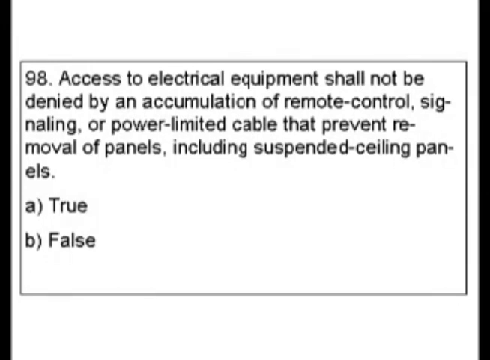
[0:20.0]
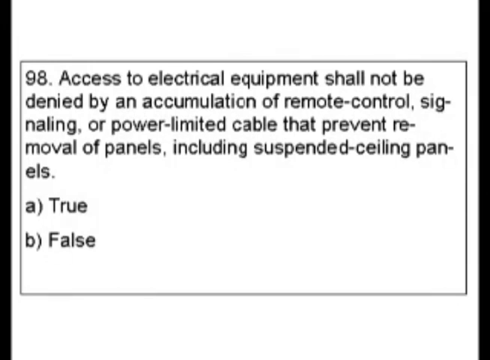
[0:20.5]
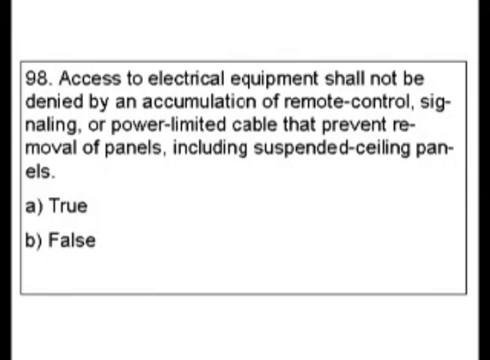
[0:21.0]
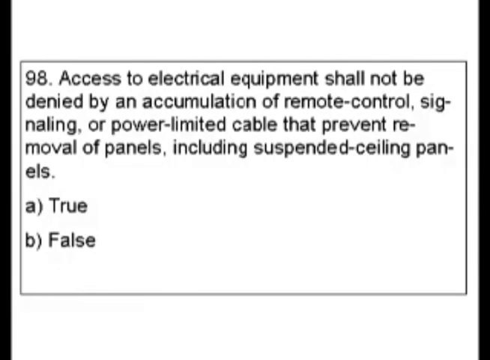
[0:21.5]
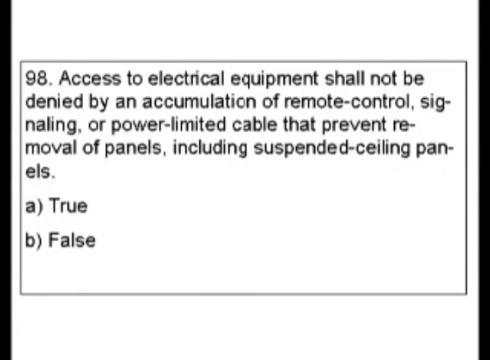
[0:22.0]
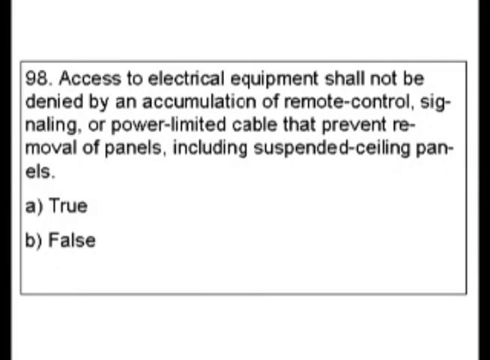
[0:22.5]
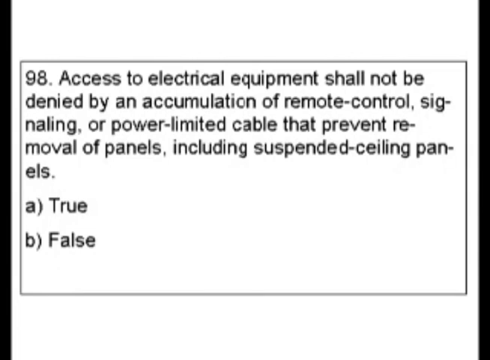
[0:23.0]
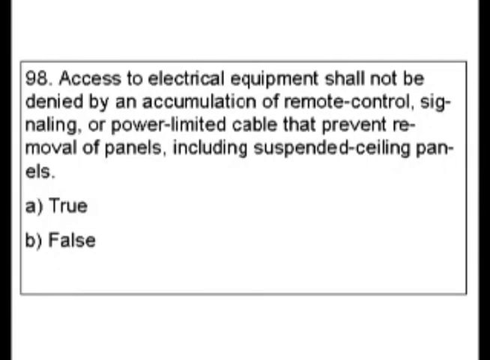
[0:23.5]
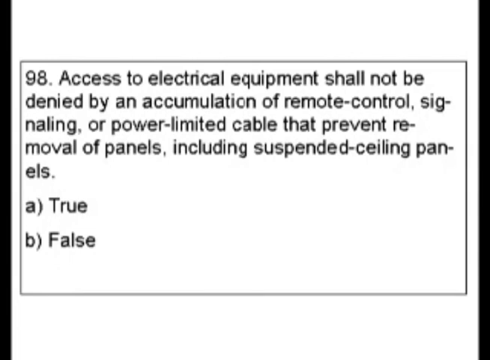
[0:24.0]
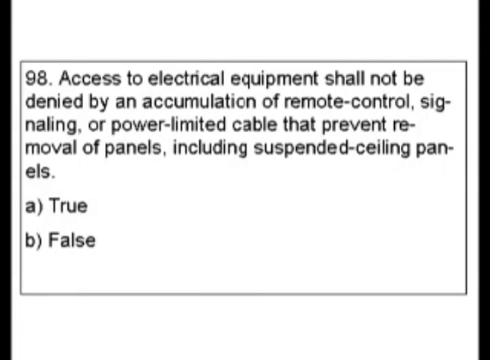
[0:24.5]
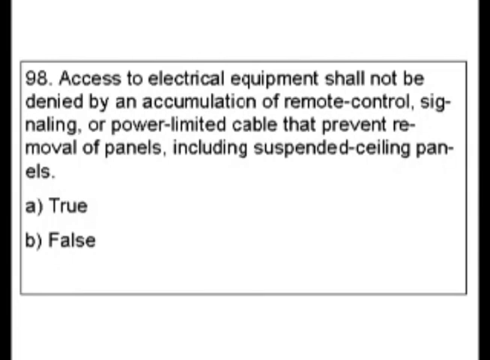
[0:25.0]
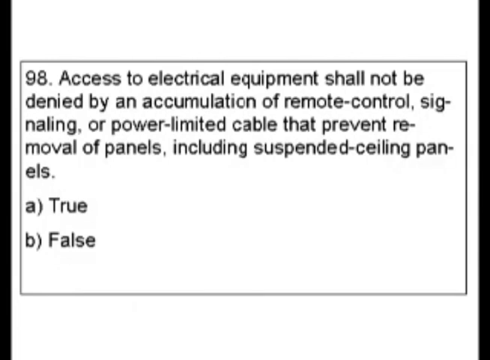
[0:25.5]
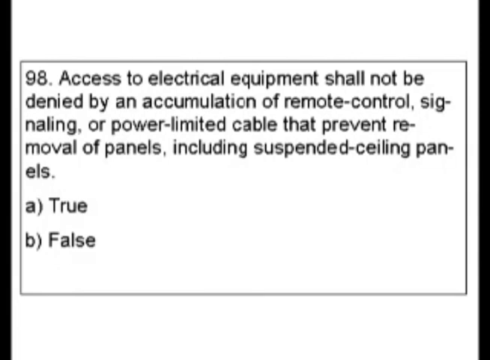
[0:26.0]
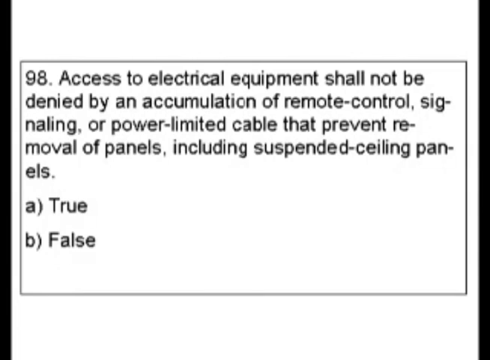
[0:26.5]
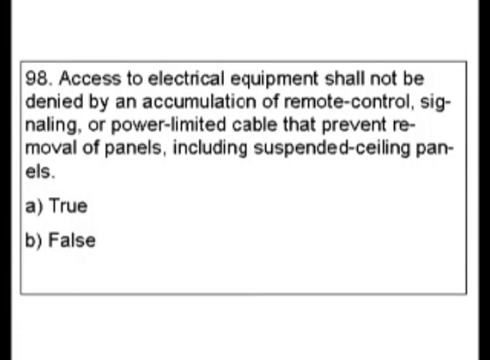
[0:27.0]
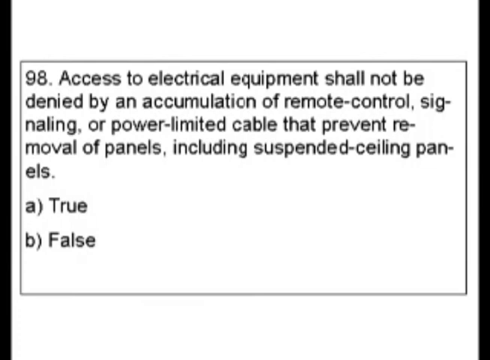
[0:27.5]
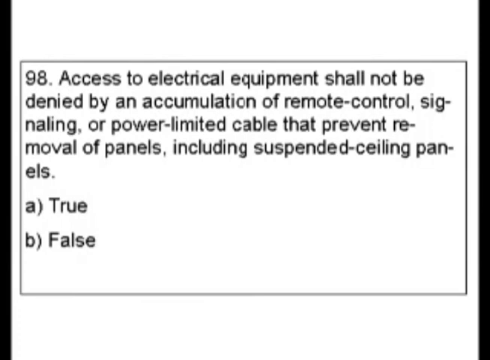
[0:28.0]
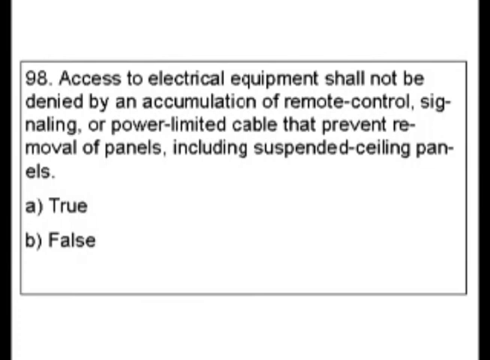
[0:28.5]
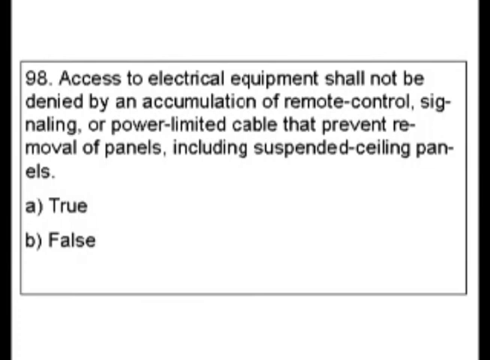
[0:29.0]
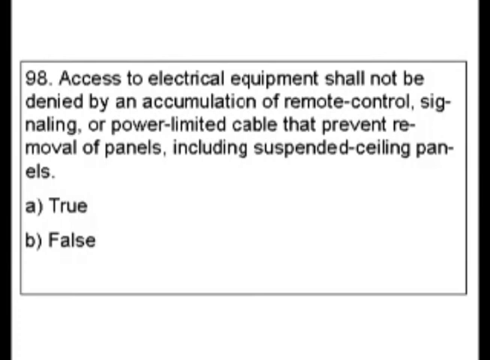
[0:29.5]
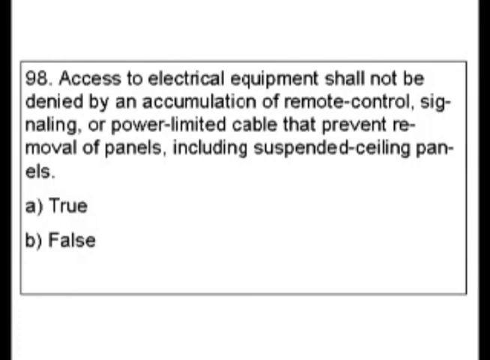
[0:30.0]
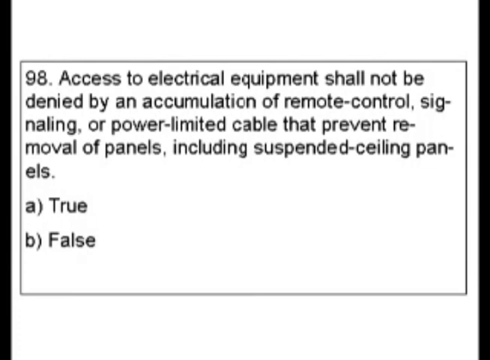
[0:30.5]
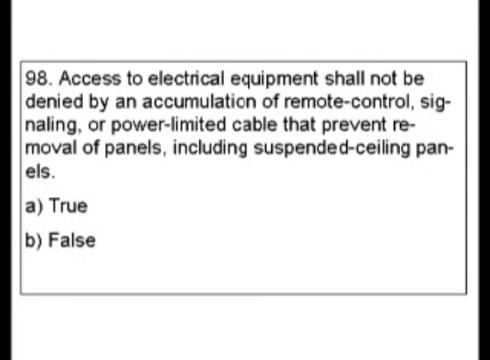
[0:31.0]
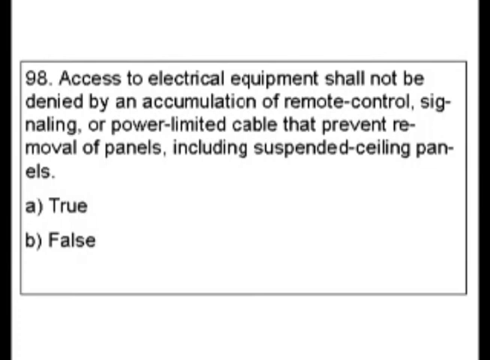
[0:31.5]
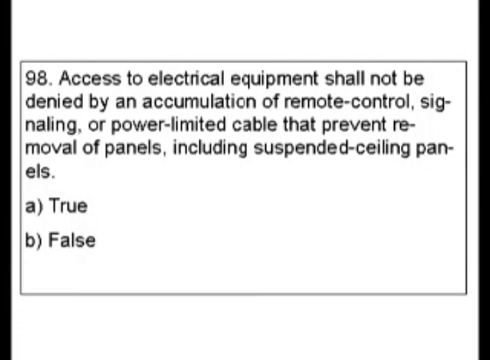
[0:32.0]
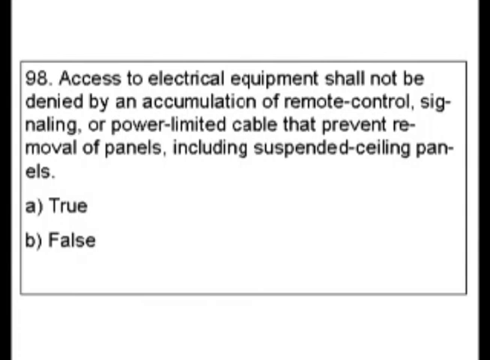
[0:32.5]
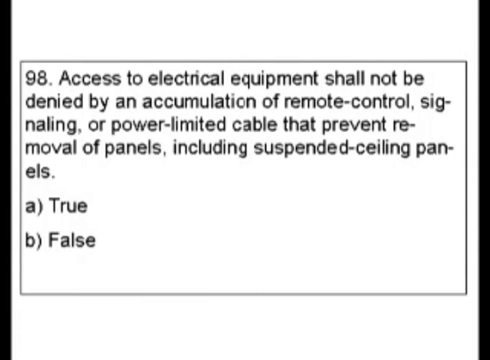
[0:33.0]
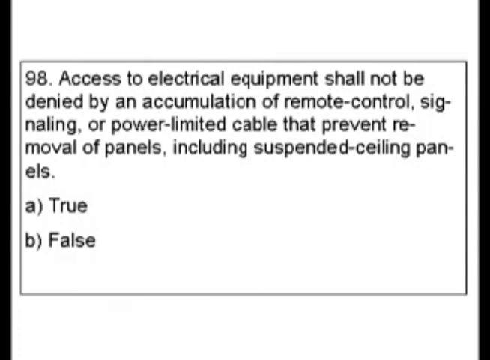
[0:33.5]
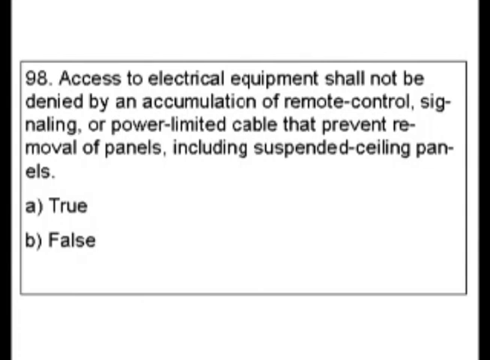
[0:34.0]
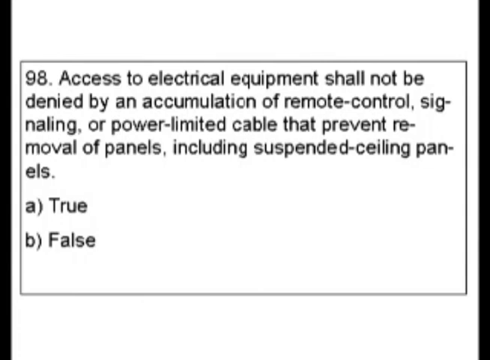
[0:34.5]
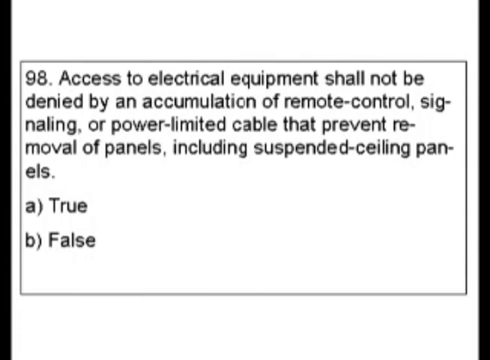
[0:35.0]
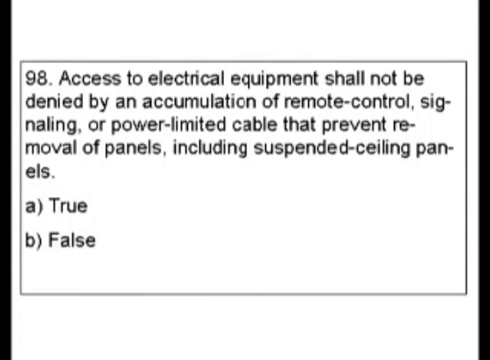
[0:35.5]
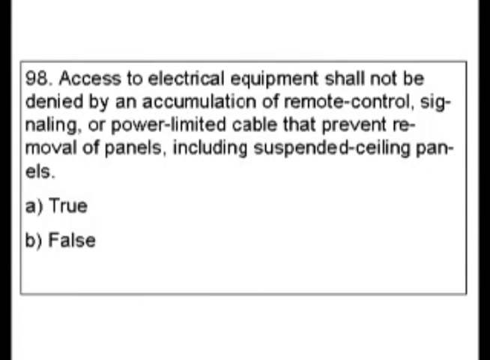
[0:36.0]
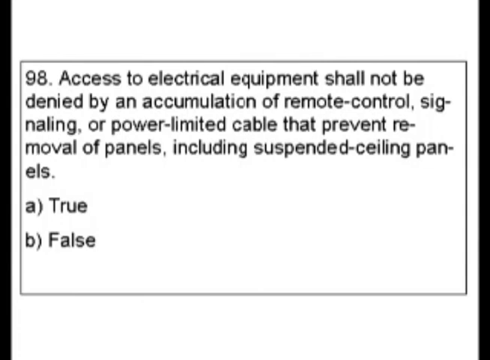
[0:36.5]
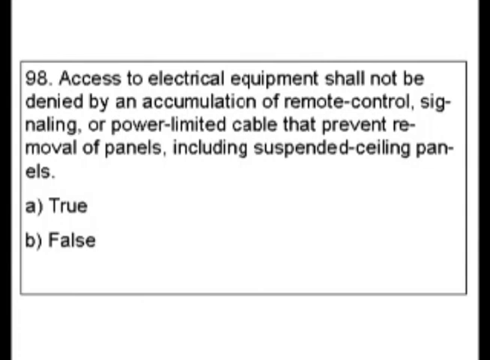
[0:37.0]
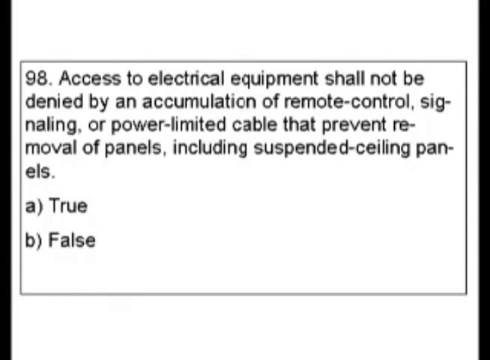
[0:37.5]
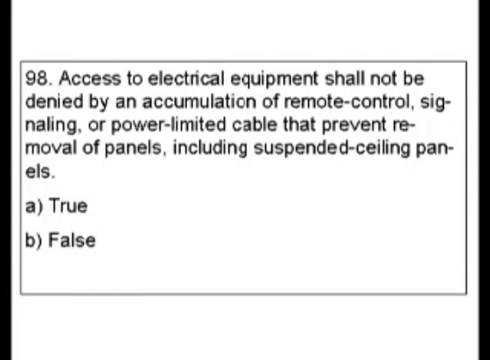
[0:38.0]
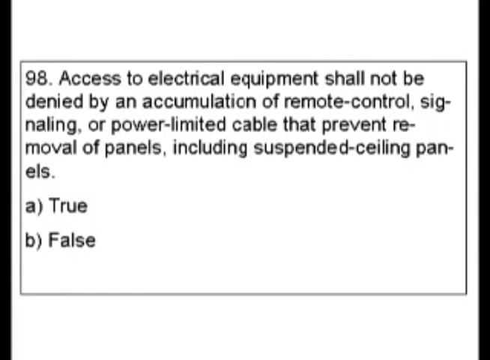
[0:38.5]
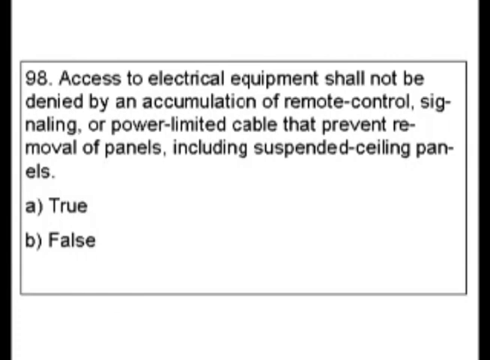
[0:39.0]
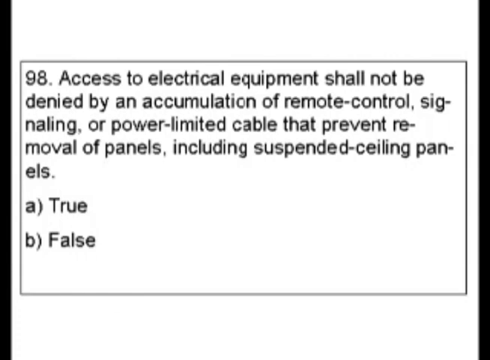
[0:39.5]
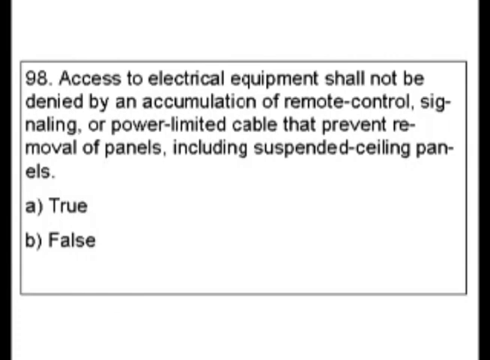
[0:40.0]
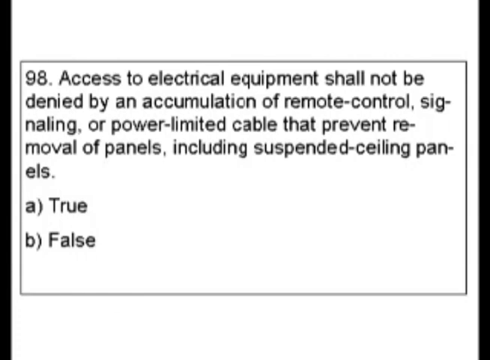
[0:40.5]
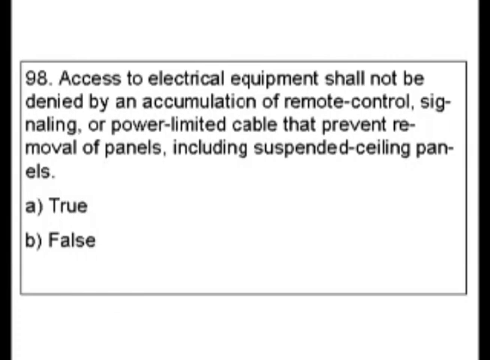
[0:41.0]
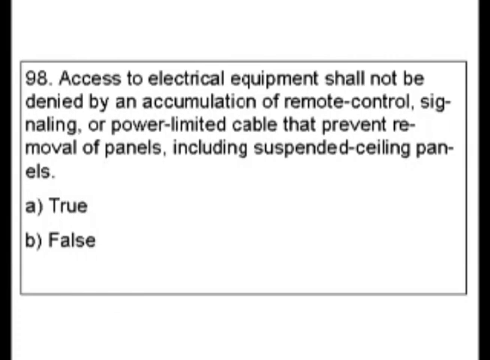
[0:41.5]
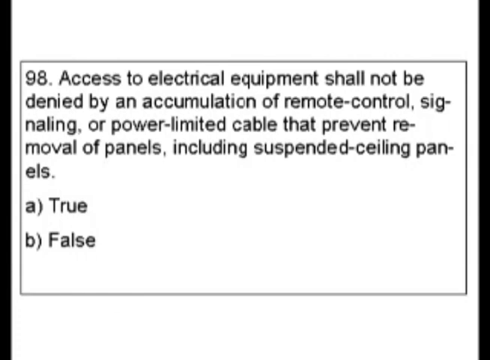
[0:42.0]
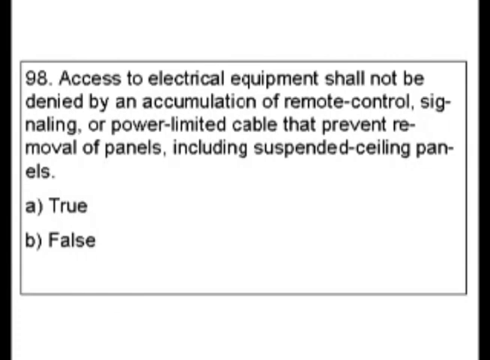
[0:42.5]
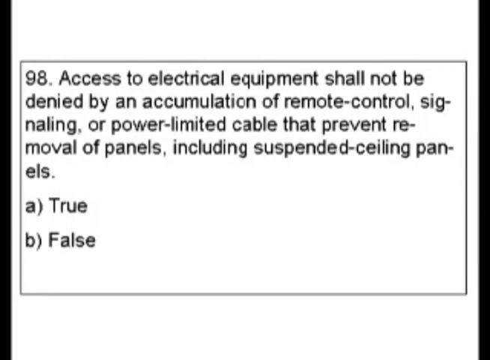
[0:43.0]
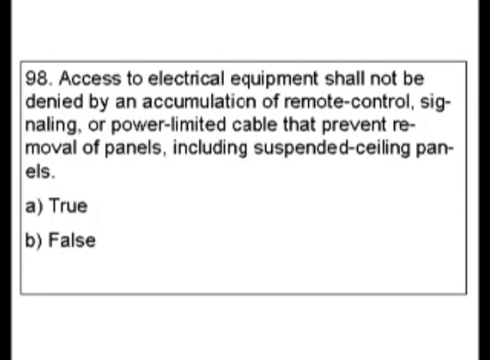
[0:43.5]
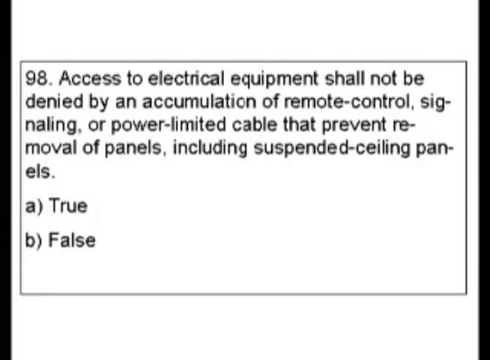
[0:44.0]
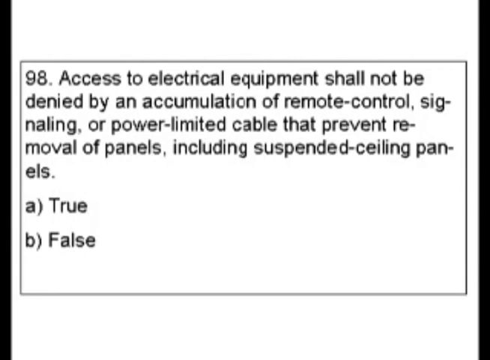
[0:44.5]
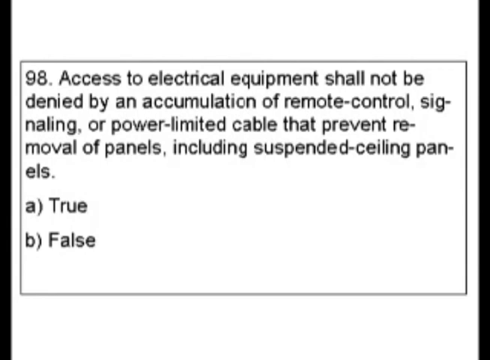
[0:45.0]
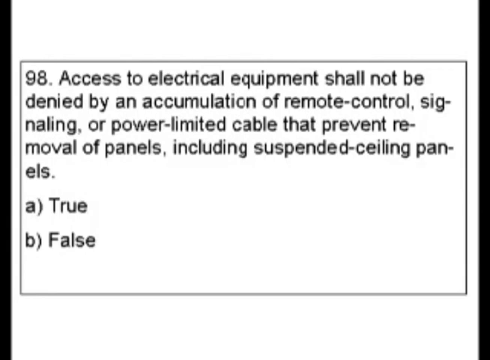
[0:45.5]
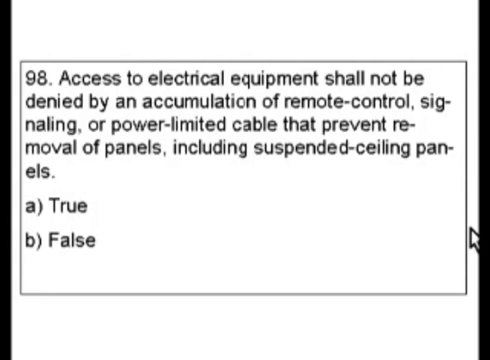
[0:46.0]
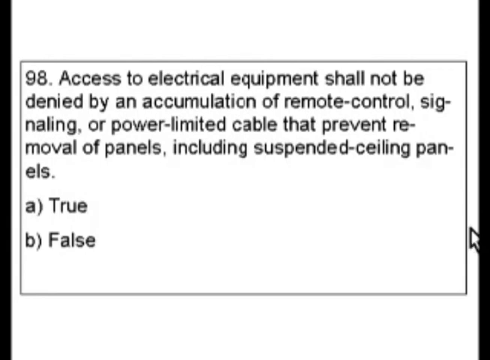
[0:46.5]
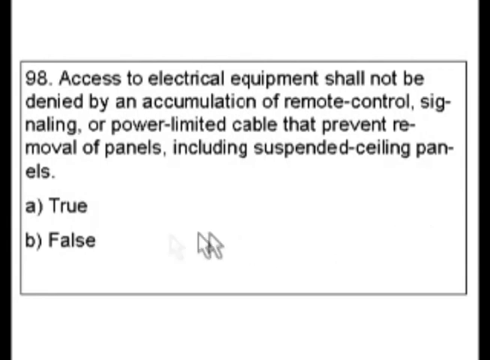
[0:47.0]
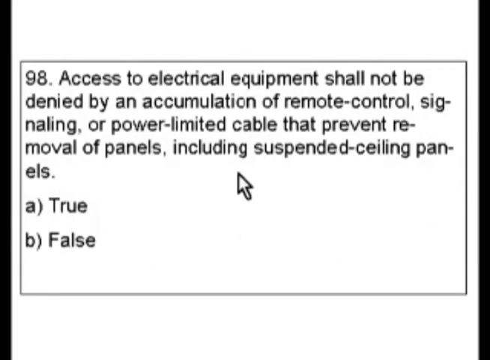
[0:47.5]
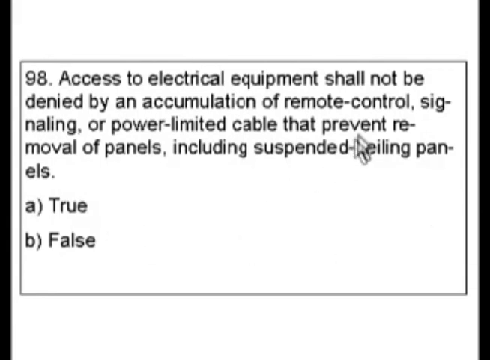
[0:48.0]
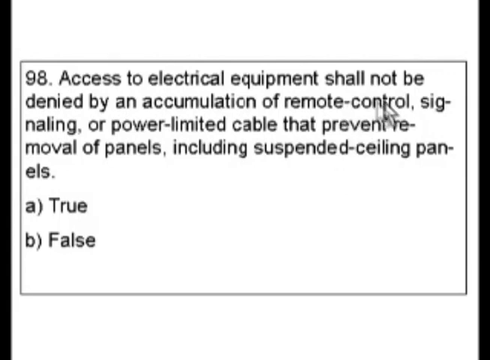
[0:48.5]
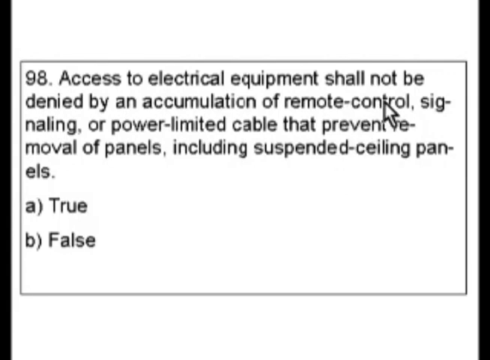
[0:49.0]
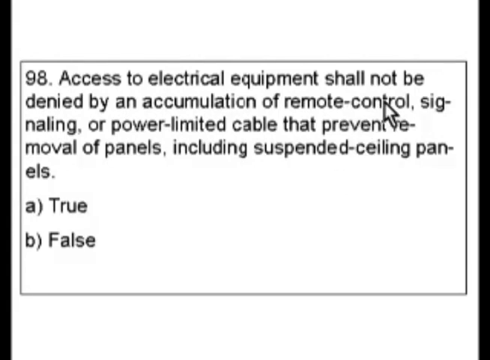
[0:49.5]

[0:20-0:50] Question 98 appears in a black frame at the center of the screen, all on a white background. The text reads "access to electrical equipment shall not be denied by accumulation of remote control signaling or power limited cable that prevents removal of panels including suspended ceiling panels." The first option, labeled A, is true, and the second option, labeled B, is false. After a while a cursor appears; it first goes to the words "remote control," then moves to false, and the user is probably thinking about the right answer.